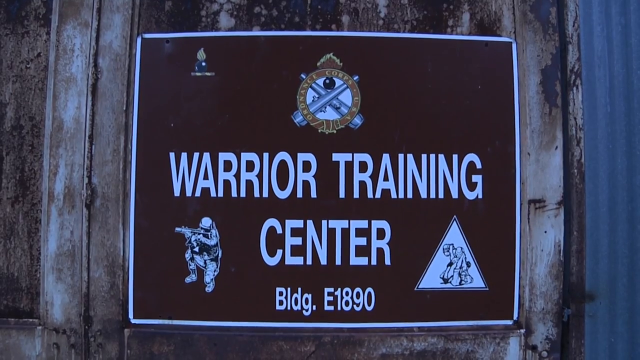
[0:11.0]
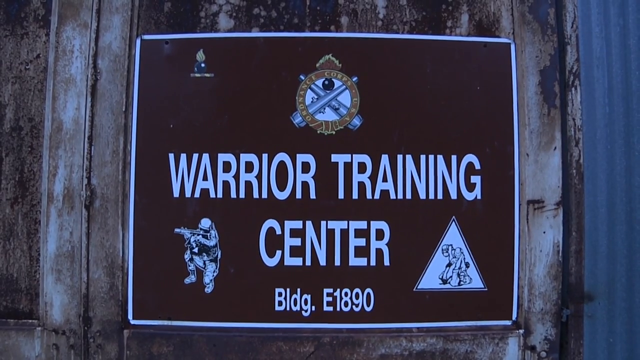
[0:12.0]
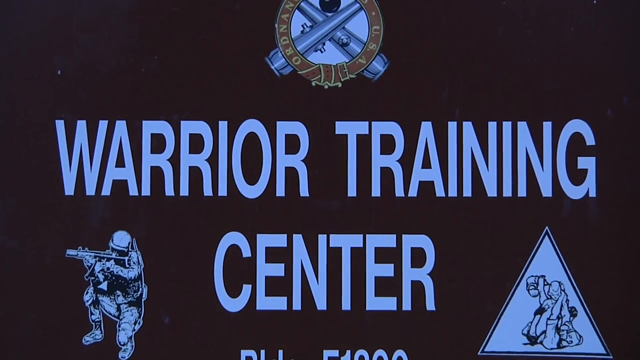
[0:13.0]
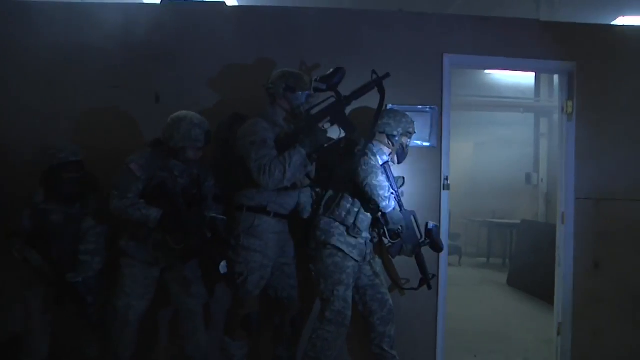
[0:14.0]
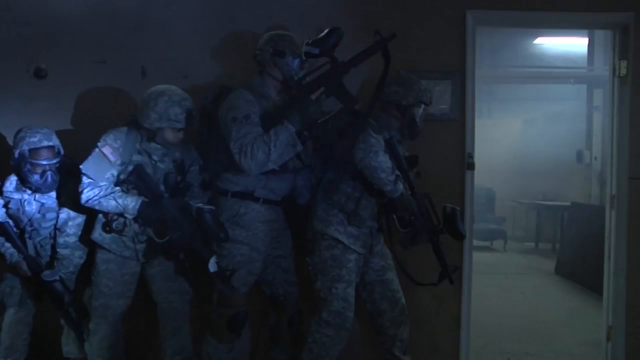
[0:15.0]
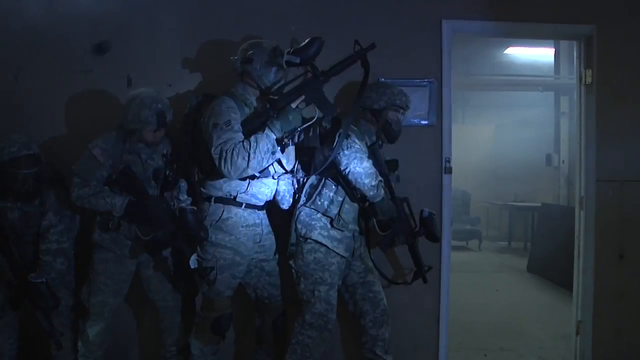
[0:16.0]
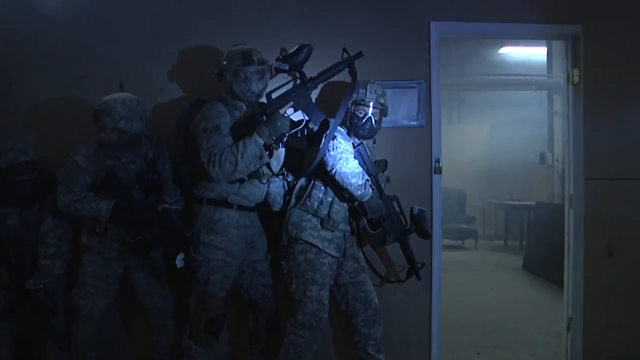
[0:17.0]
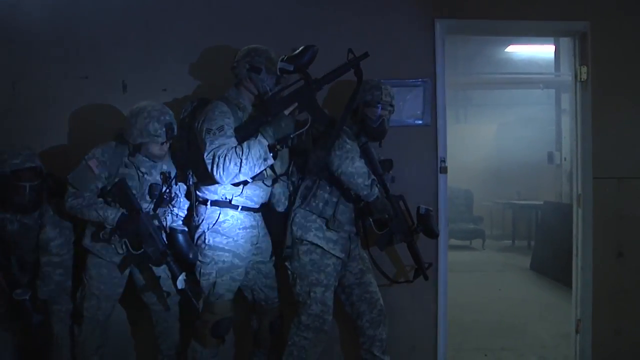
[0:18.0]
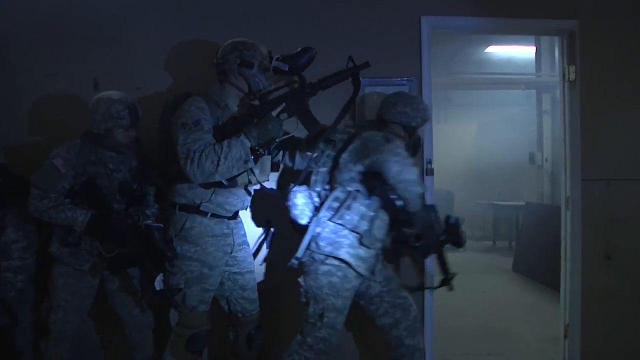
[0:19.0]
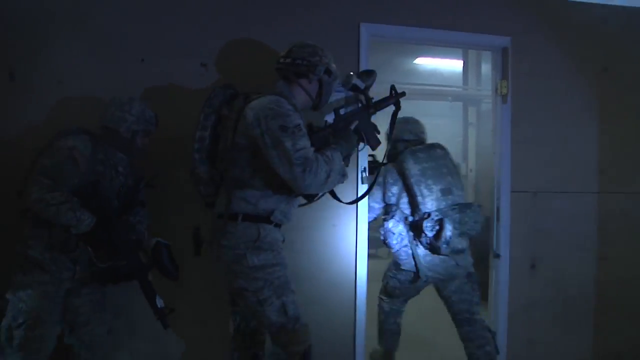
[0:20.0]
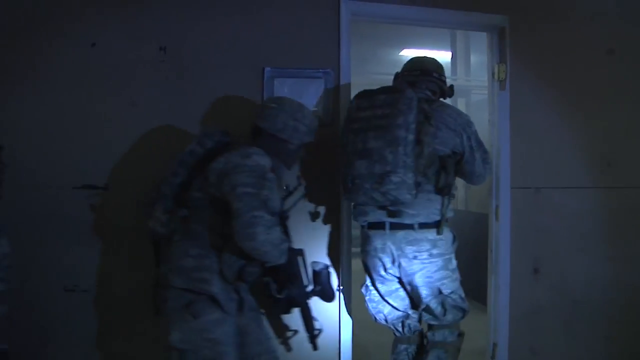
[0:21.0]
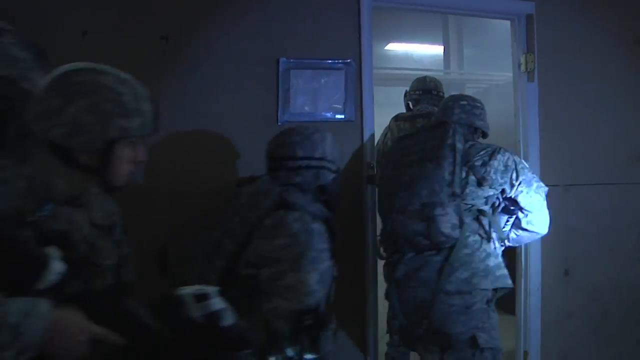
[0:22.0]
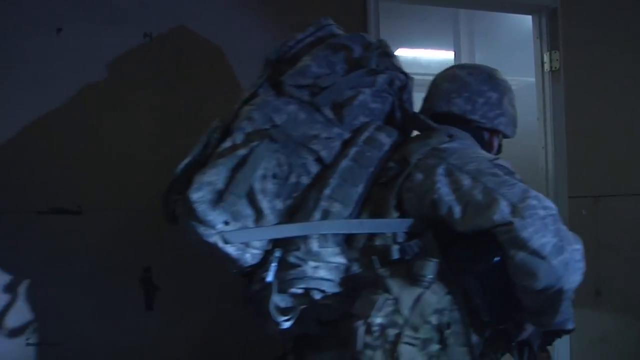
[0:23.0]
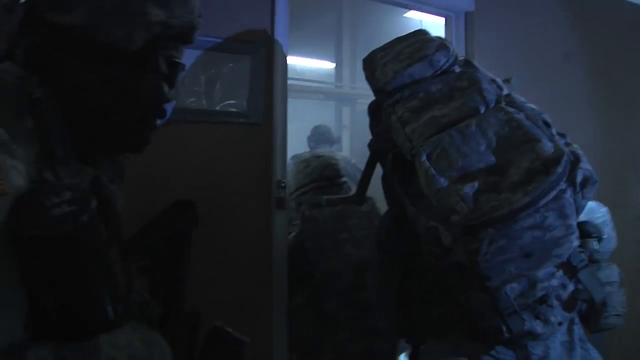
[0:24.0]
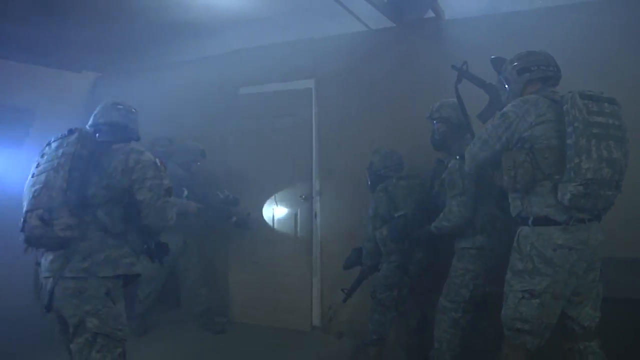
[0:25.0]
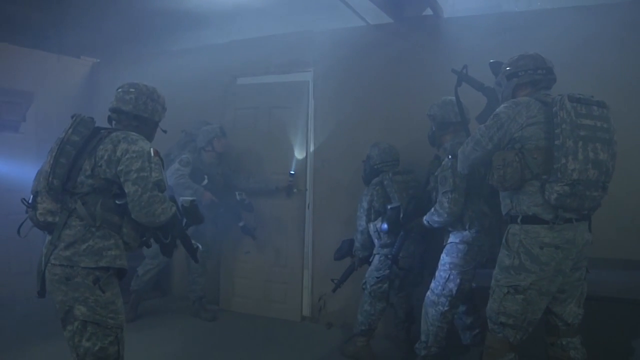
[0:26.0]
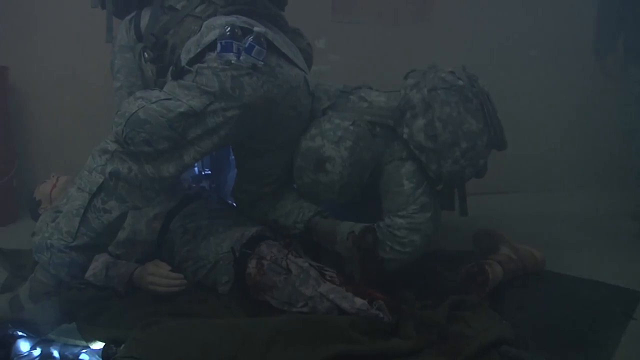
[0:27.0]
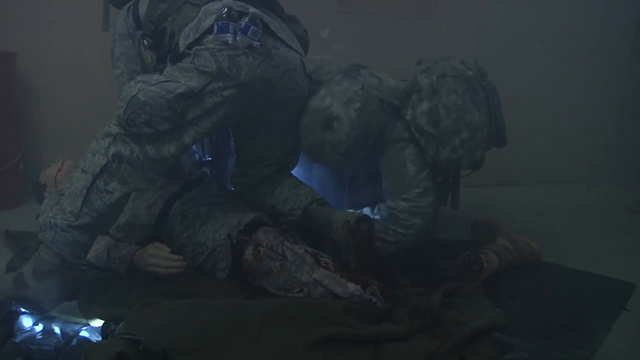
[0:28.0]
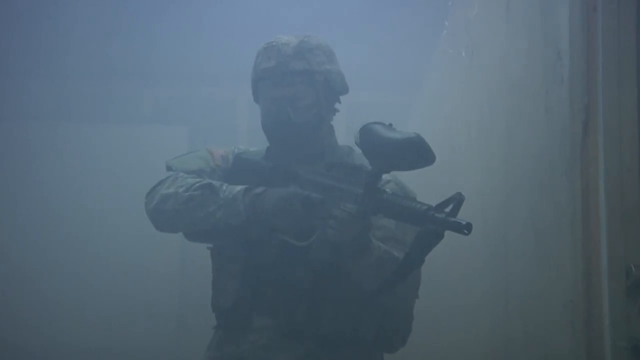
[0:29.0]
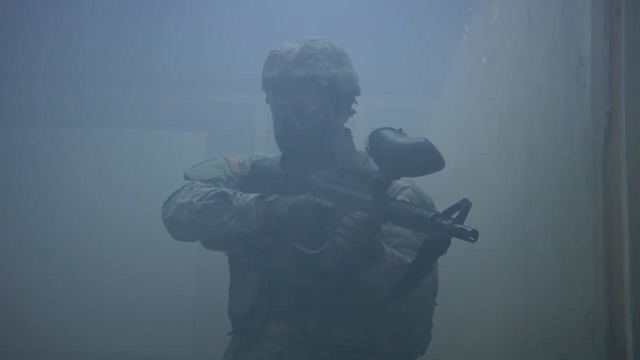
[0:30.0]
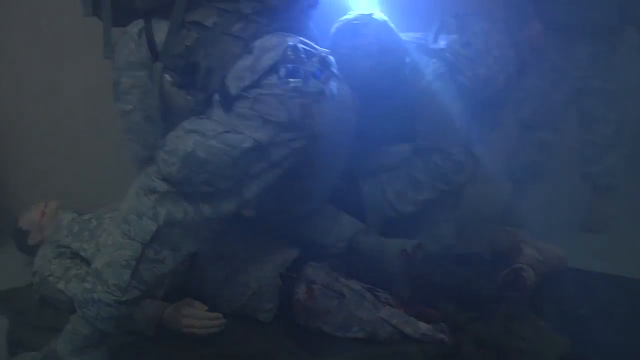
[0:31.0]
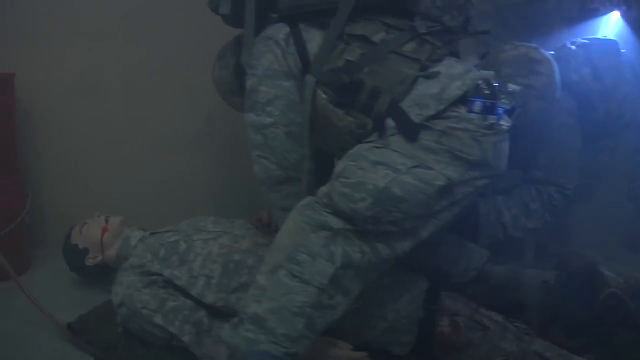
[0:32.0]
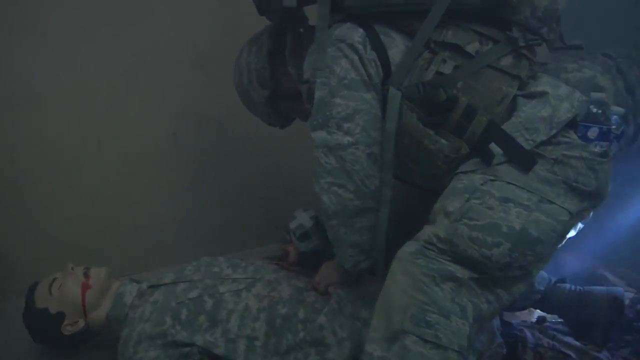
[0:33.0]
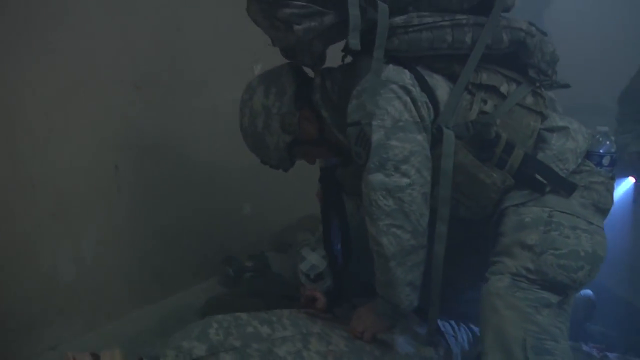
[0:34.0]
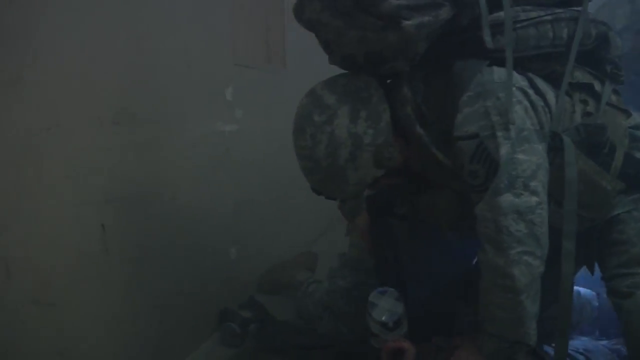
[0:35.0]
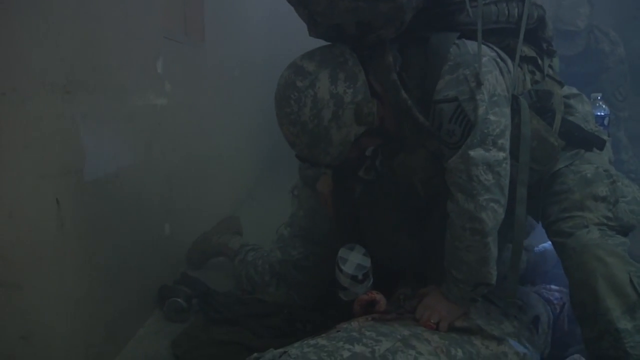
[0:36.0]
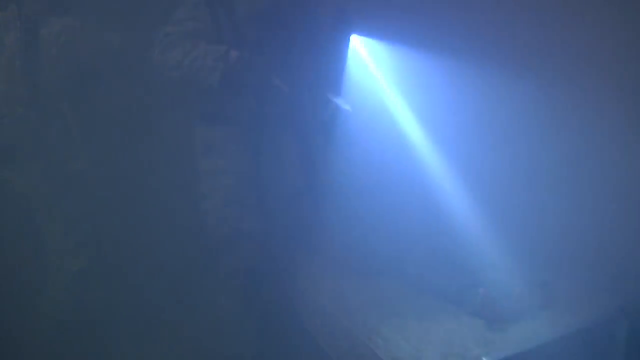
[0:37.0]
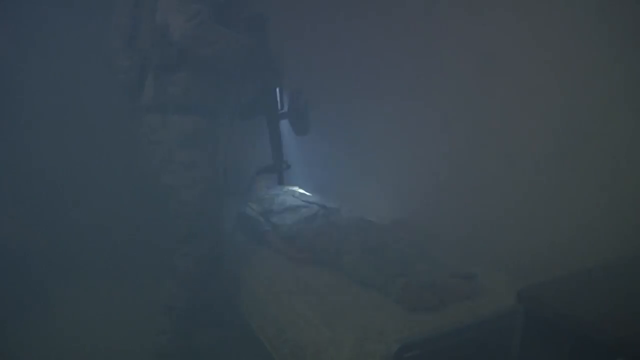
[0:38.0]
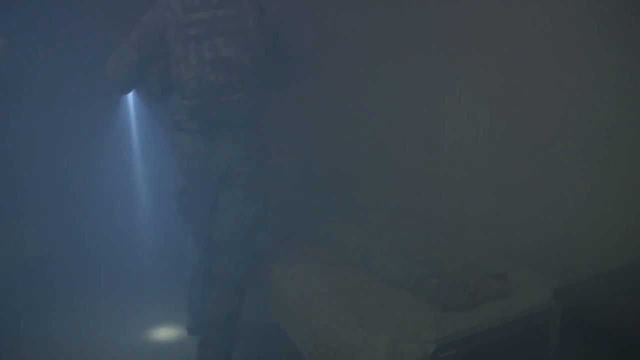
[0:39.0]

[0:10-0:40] A board reads "warrior training center" and has three logos on it. A couple of soldiers, fully dressed in their uniforms and holding large weapons, stand by a wall checking the coast. There is an open door, and the soldier at the front indicates that they should go in; they go in with their guns ready. The soldiers then stand outside a closed door, holding torches to light up the room because it is dark. One of the soldiers opens the door and they go in. On the floor is a demo soldier wearing a soldier's uniform; he appears to be wounded and is bleeding from the mouth. The soldiers rush to assist him and are busy with him.